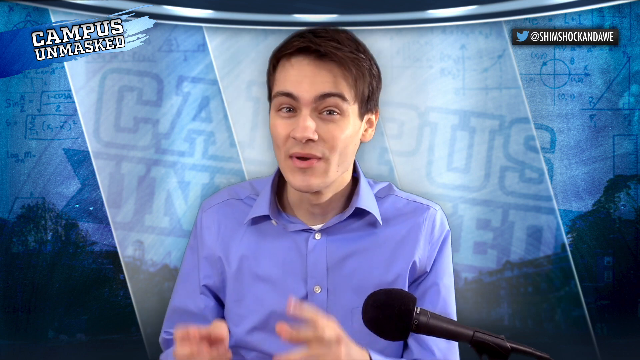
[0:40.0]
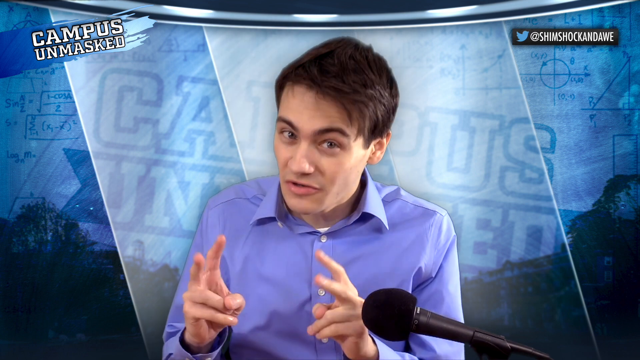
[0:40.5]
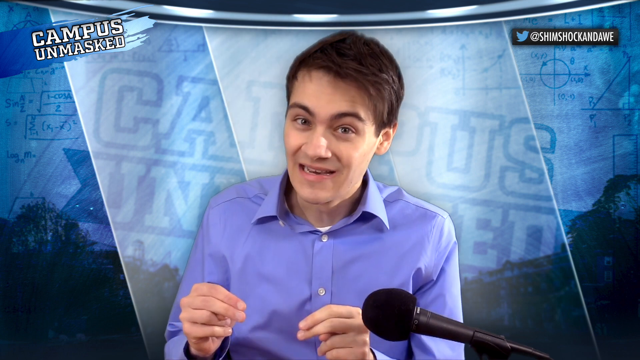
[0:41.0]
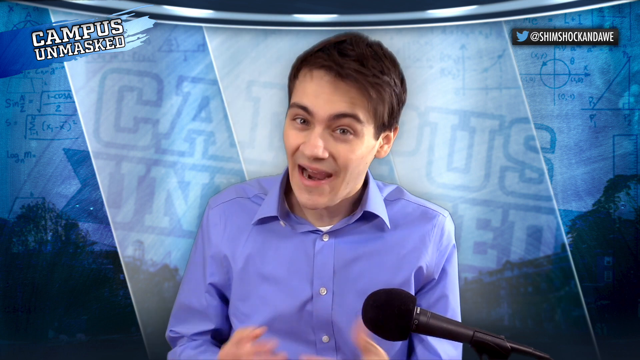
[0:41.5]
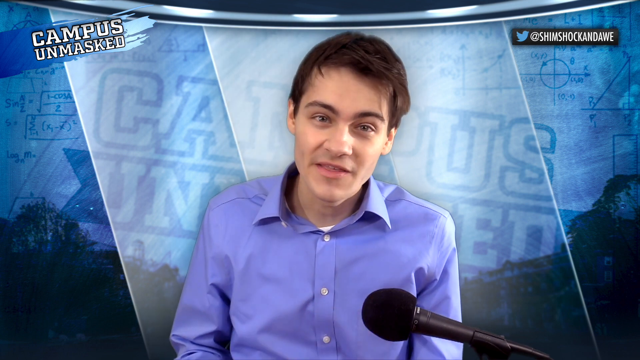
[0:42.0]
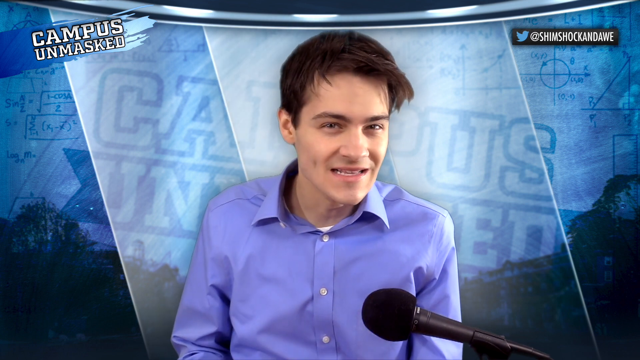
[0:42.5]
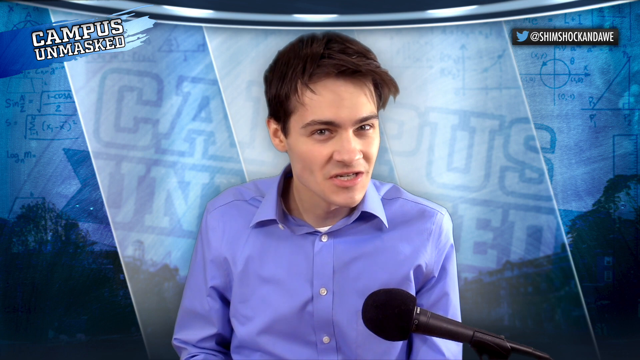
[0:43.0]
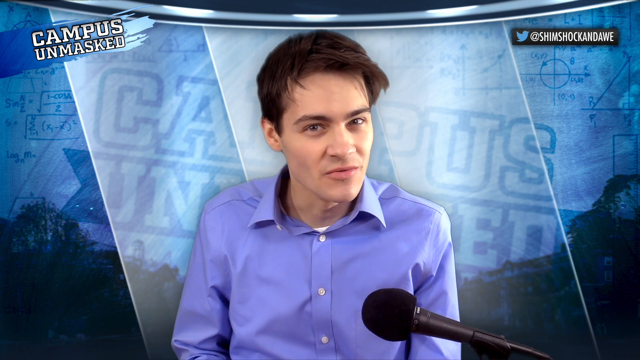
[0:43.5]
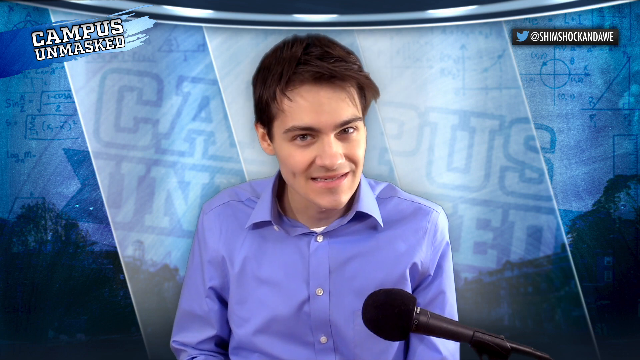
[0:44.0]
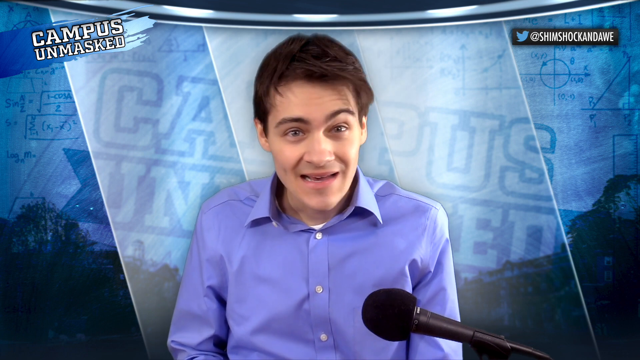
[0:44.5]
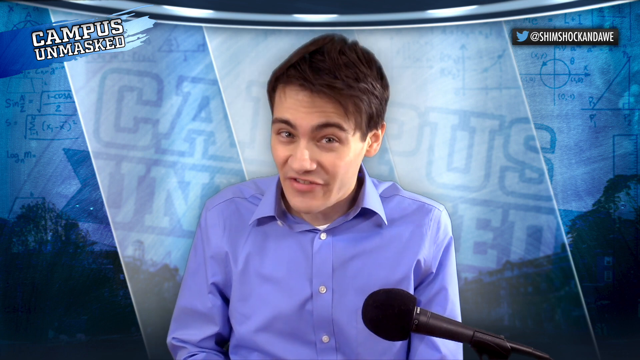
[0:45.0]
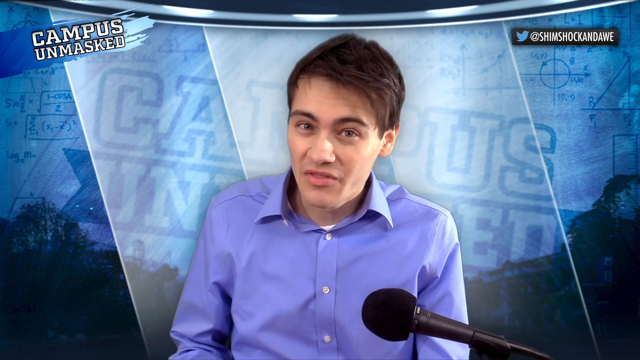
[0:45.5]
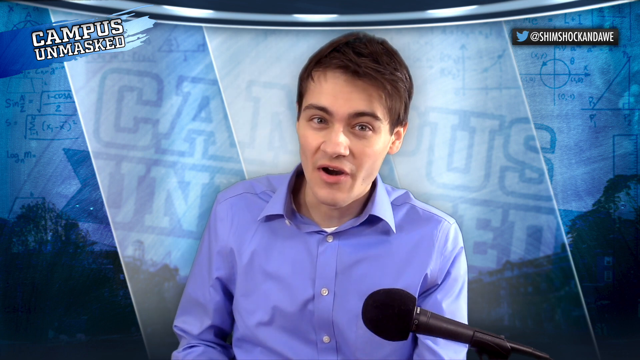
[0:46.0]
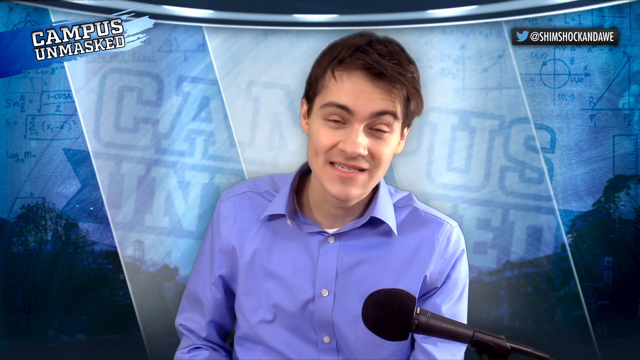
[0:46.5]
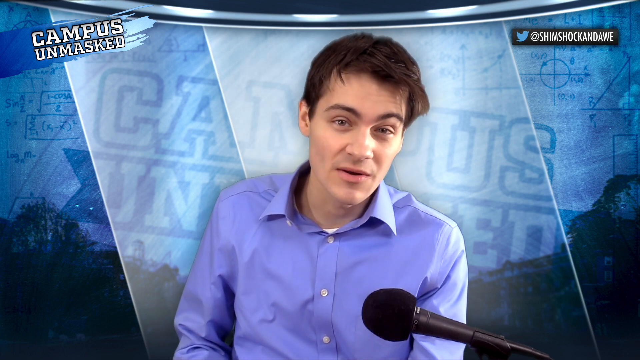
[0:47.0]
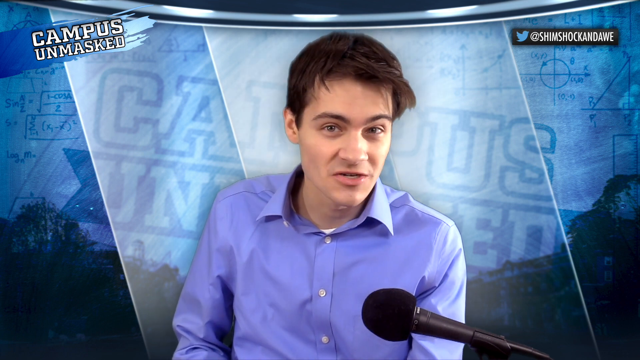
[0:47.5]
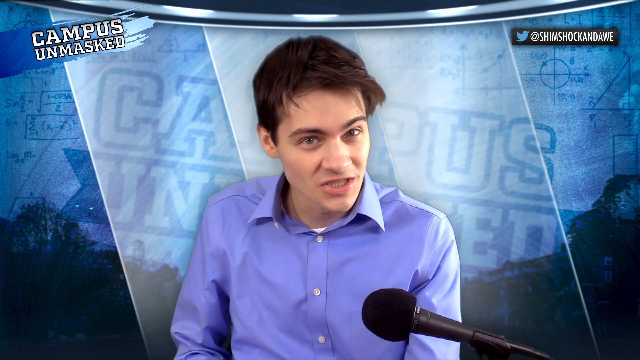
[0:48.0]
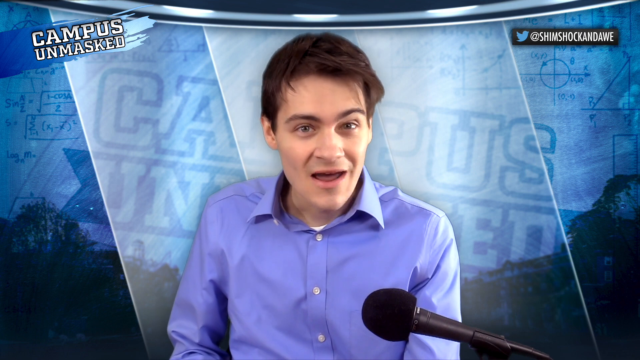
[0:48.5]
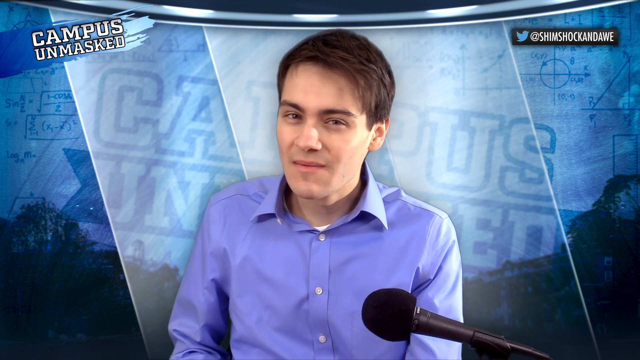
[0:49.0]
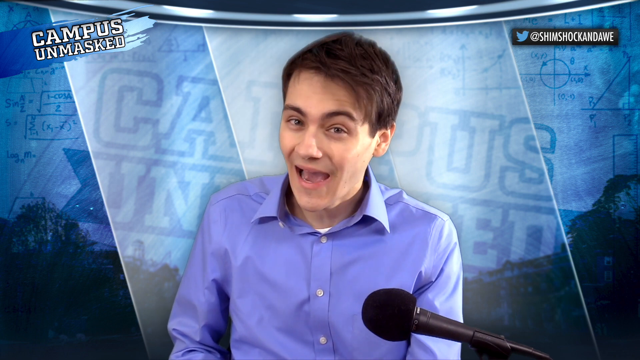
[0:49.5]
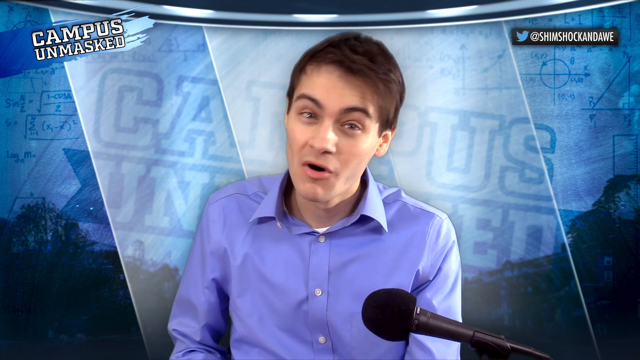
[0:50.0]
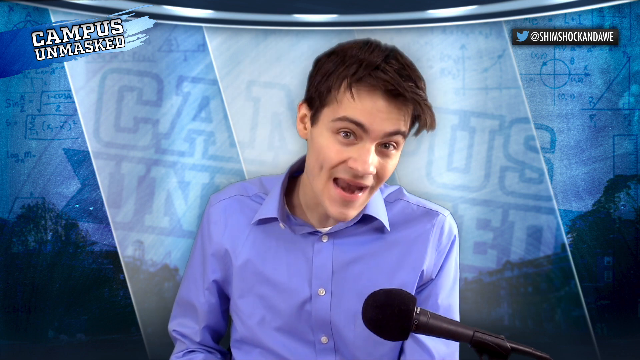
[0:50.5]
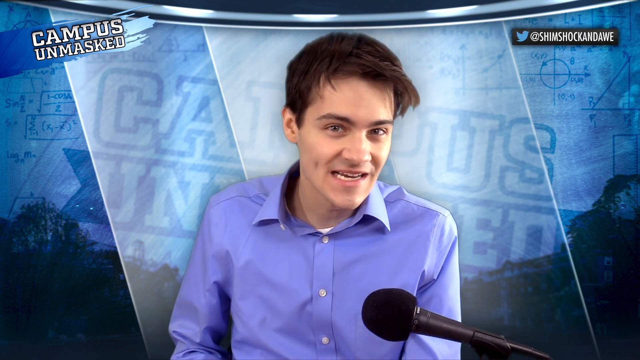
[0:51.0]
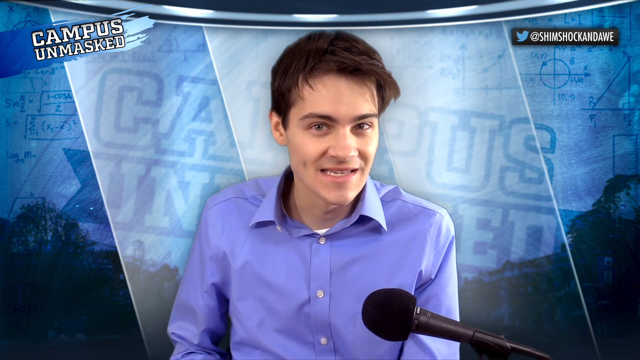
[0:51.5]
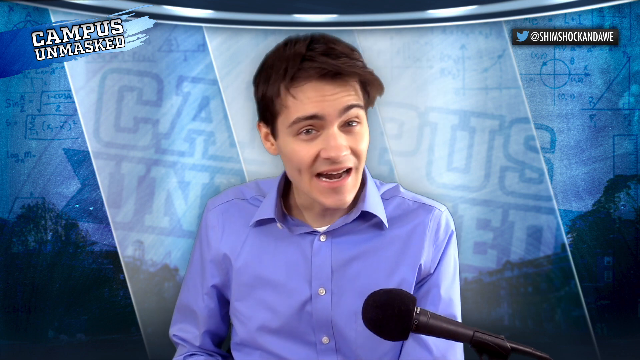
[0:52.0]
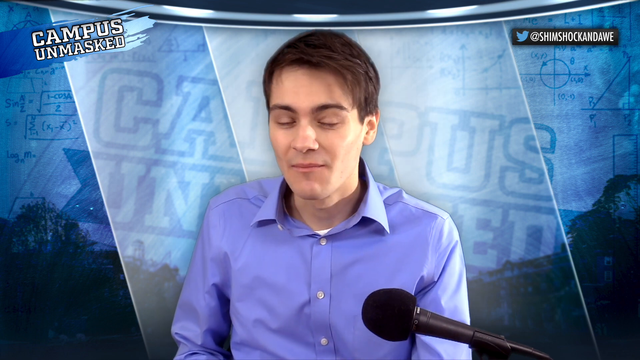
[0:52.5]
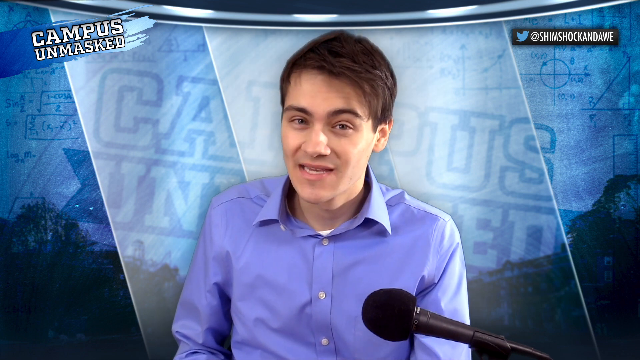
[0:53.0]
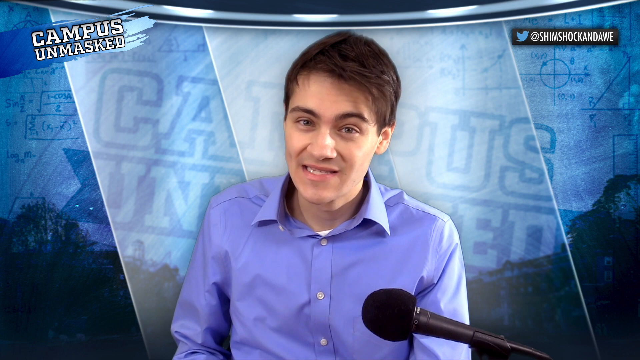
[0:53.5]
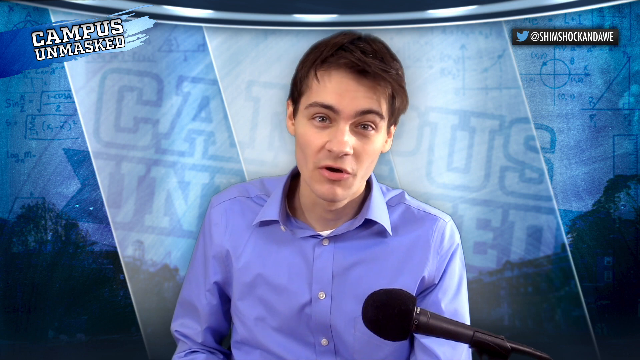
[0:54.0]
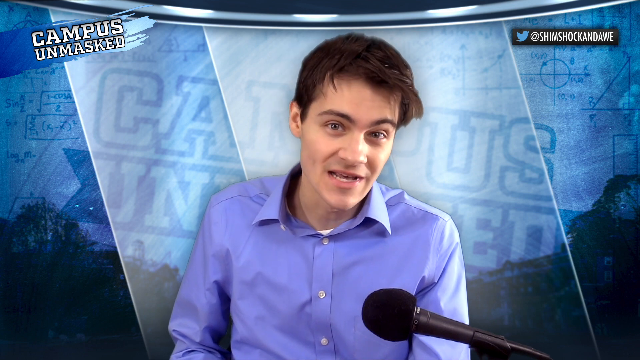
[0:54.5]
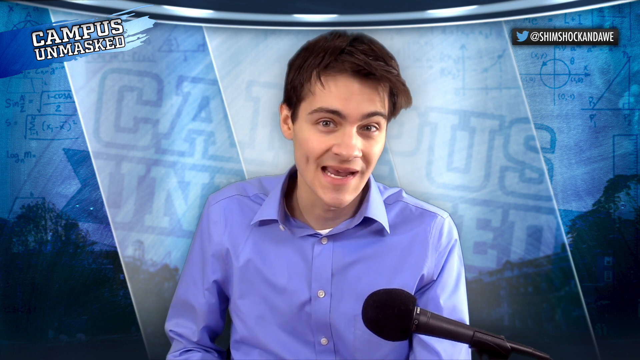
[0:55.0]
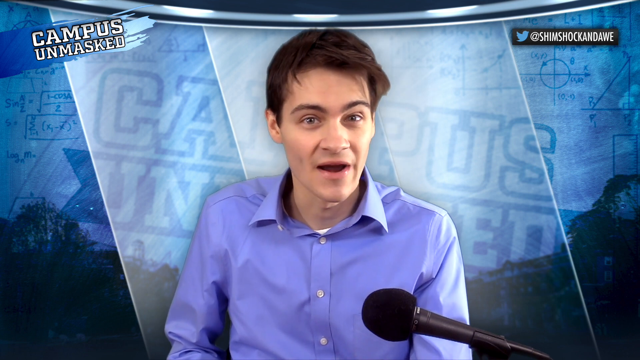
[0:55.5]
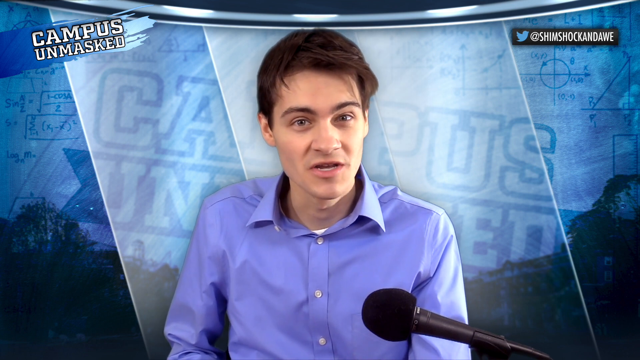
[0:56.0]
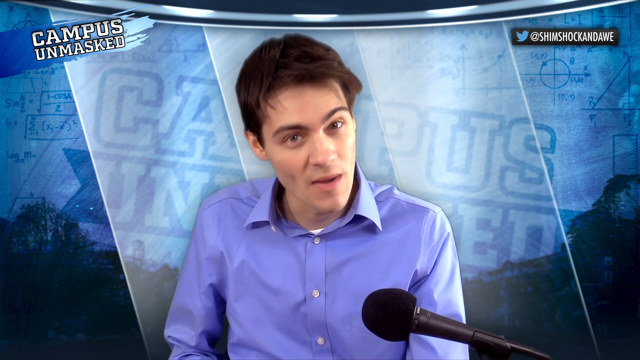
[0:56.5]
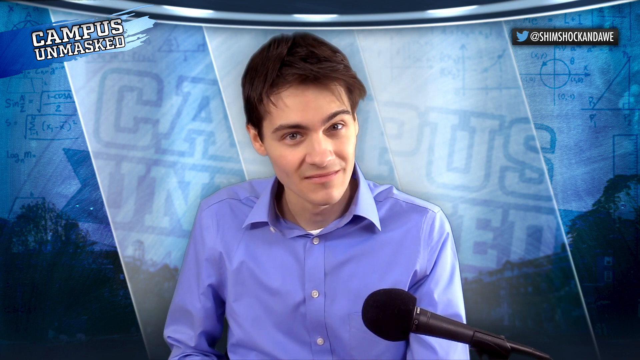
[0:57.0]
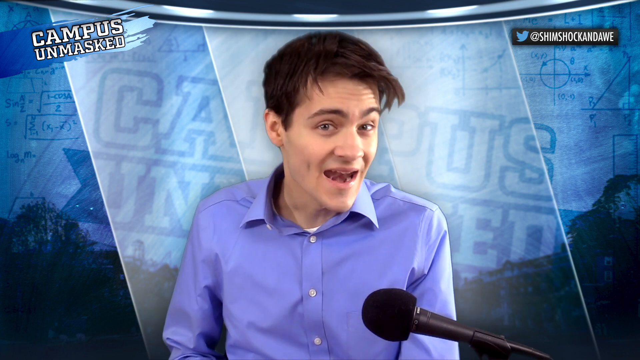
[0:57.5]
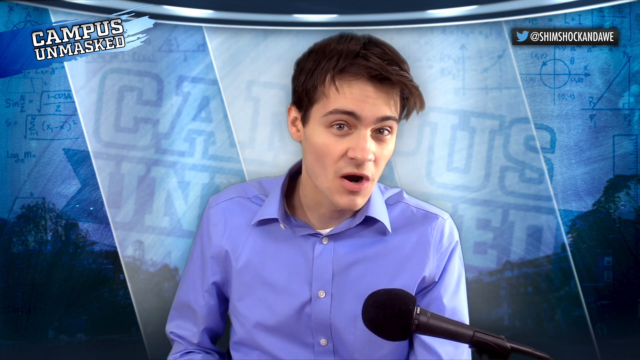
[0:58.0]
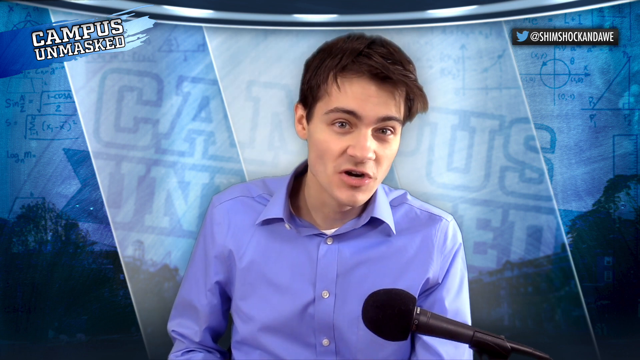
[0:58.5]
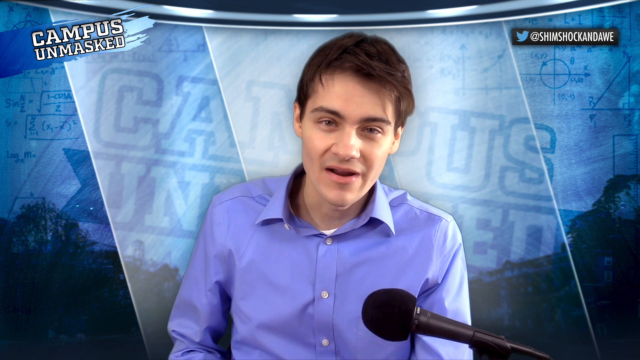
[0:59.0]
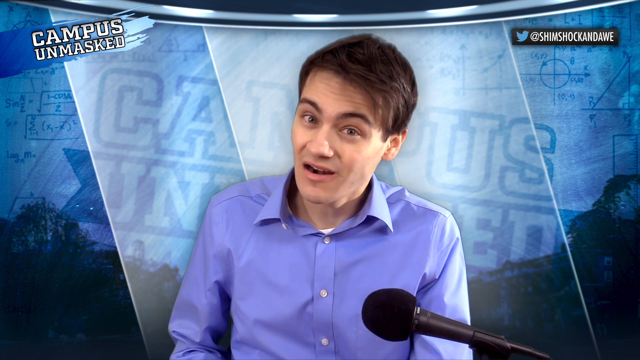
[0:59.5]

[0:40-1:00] The young man talks and looks angry; he uses his fingers like air quotes or something. He has brown hair and brown eyebrows, his eyes possibly hazel, and he seems very slim.